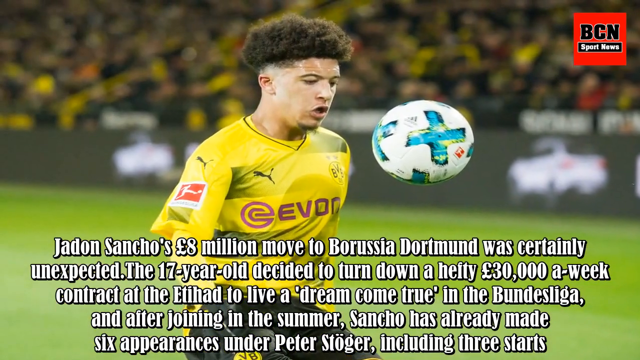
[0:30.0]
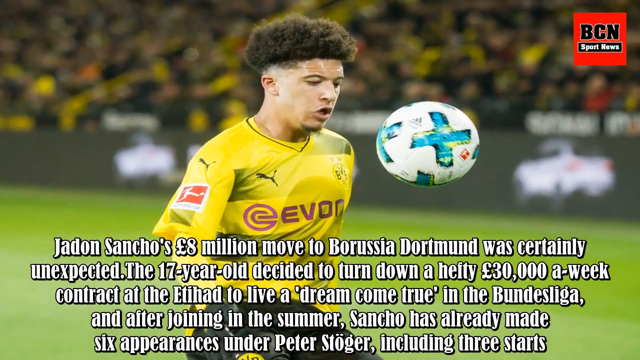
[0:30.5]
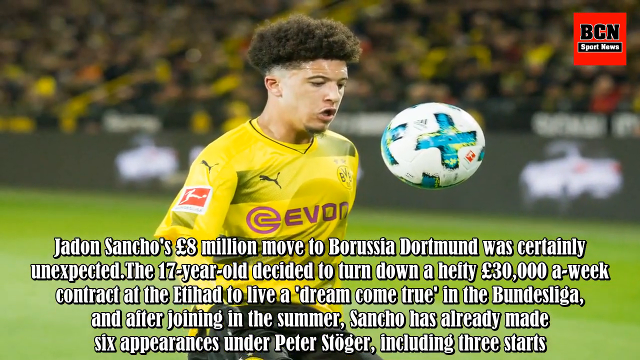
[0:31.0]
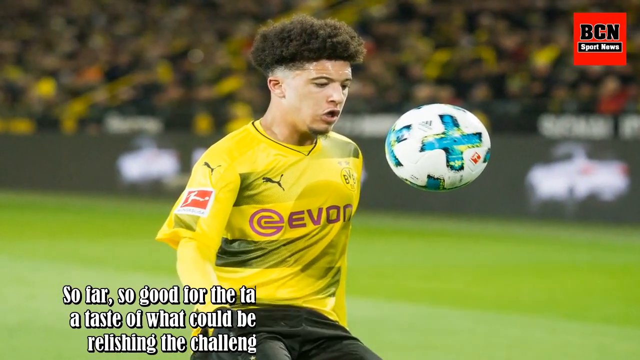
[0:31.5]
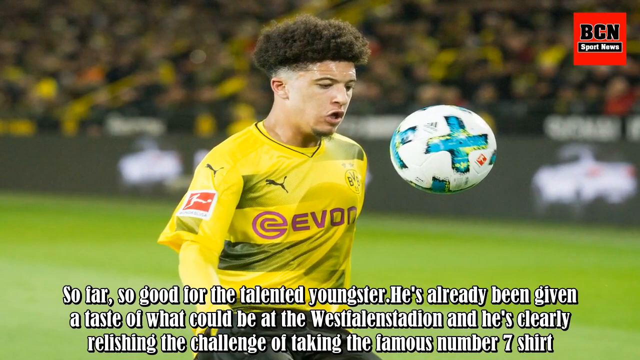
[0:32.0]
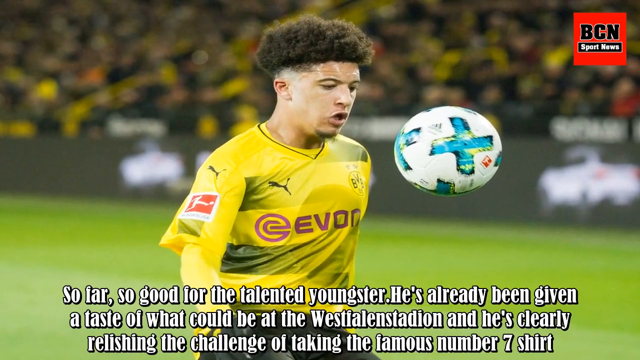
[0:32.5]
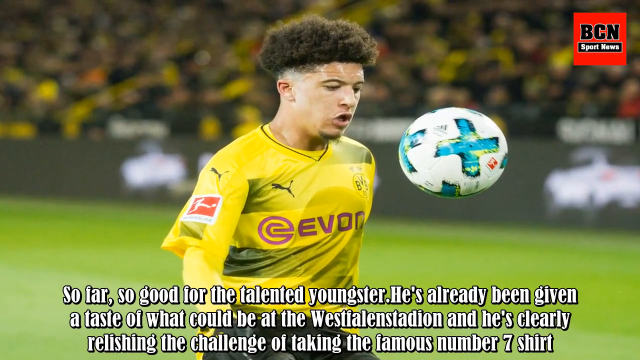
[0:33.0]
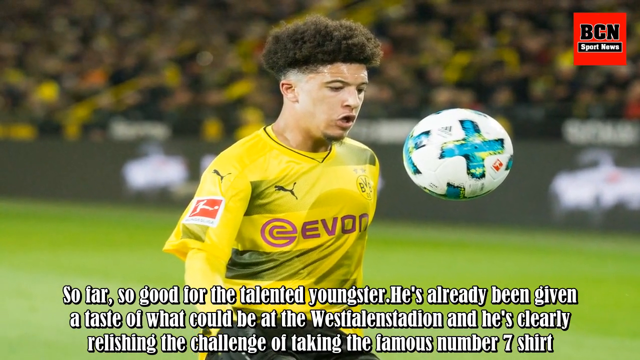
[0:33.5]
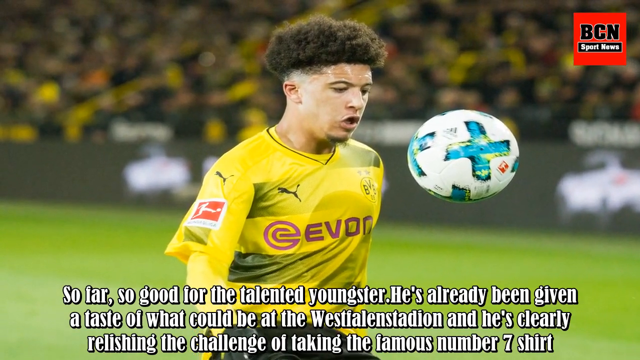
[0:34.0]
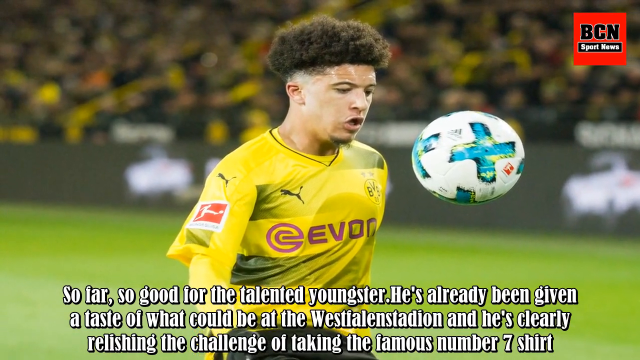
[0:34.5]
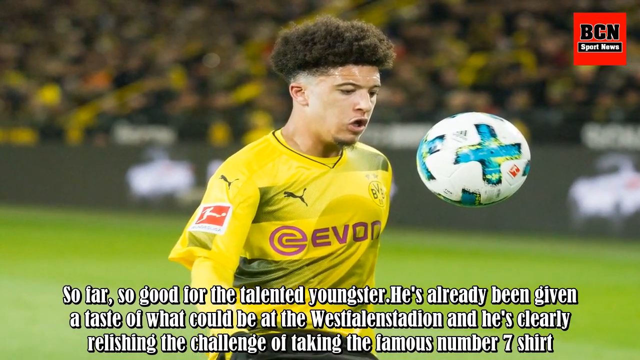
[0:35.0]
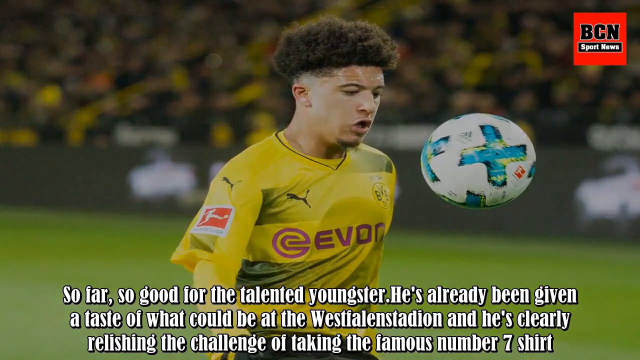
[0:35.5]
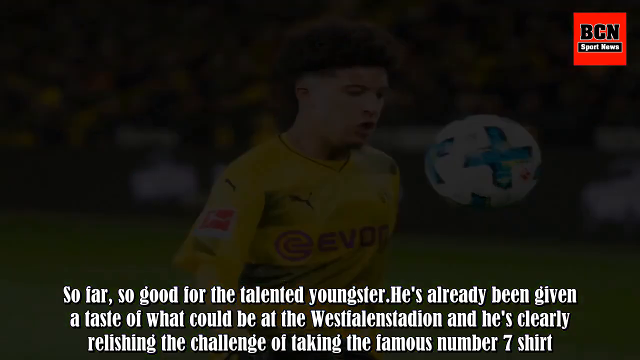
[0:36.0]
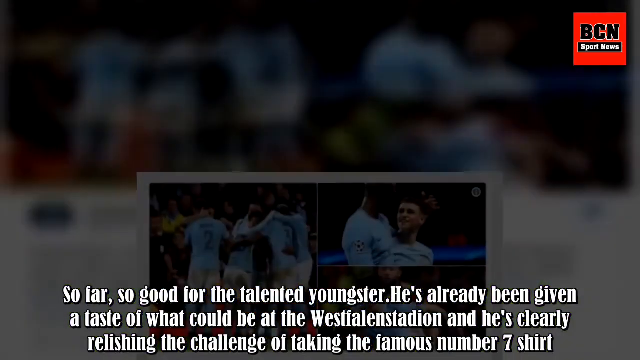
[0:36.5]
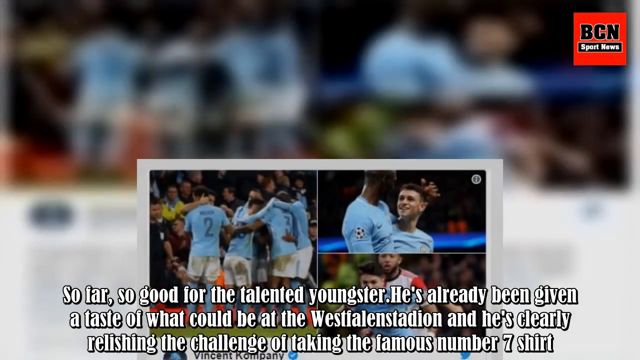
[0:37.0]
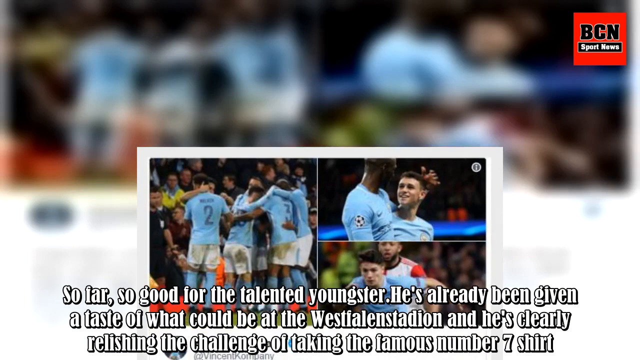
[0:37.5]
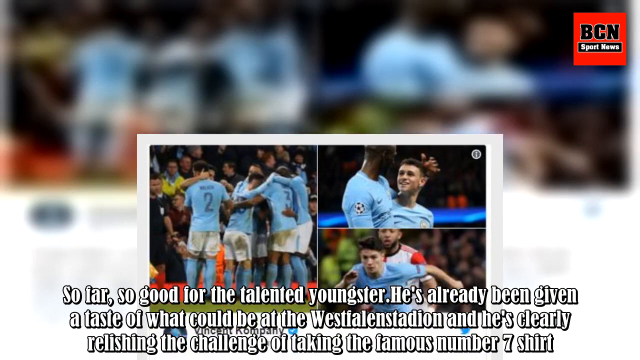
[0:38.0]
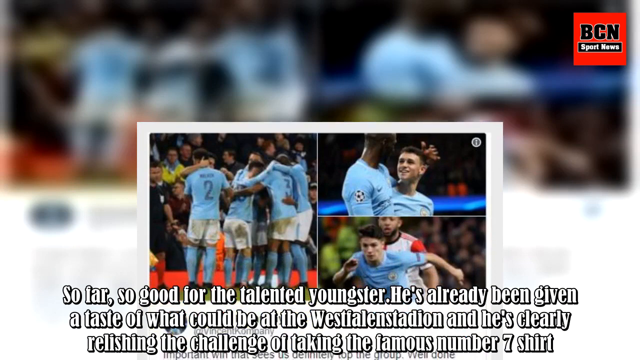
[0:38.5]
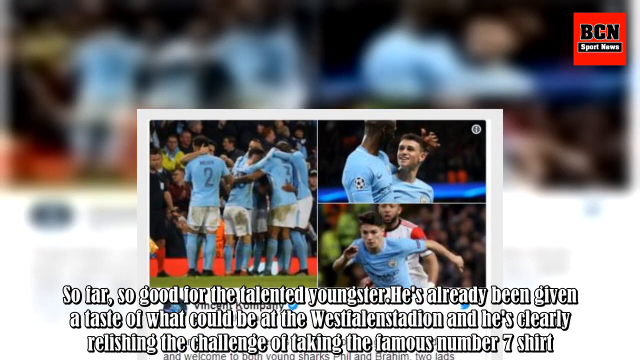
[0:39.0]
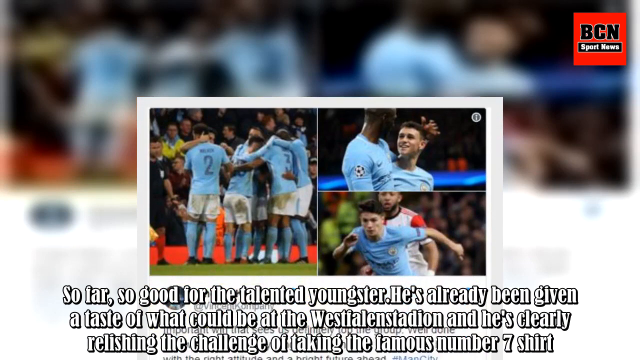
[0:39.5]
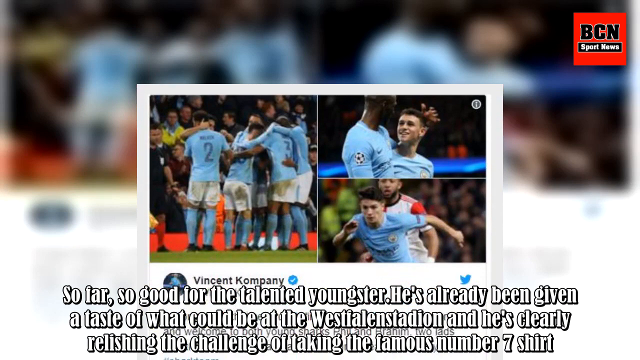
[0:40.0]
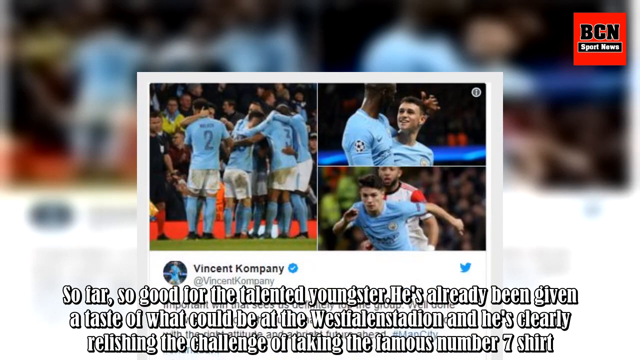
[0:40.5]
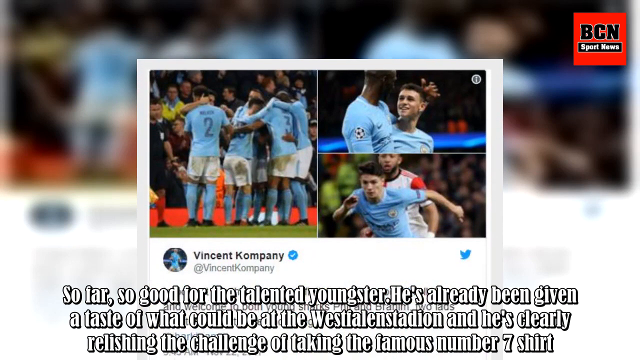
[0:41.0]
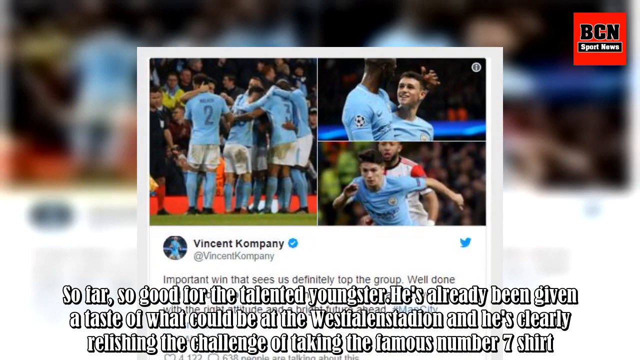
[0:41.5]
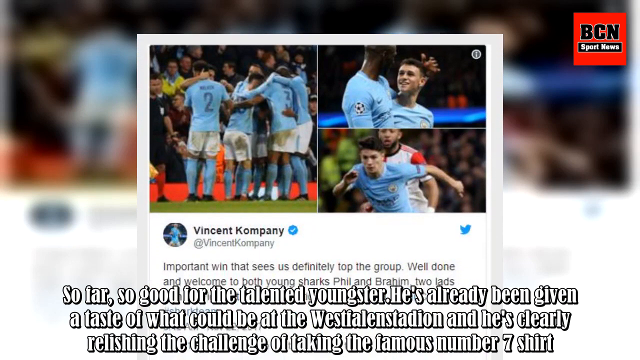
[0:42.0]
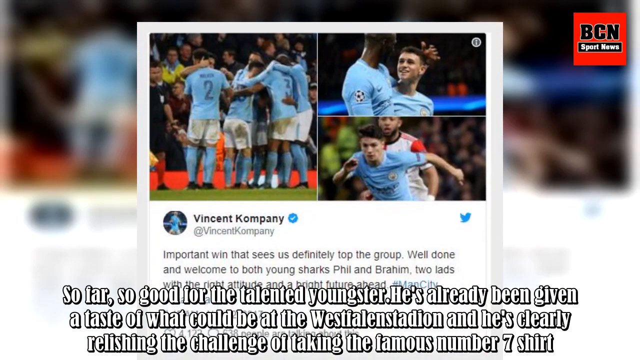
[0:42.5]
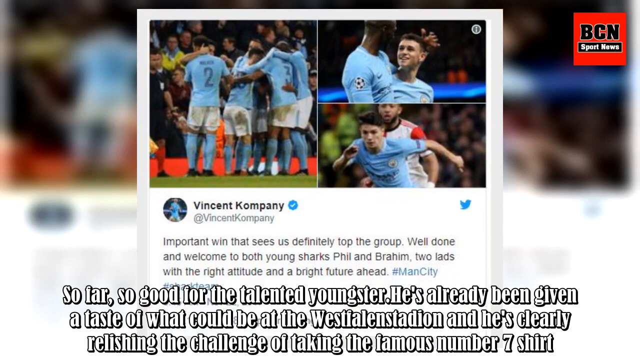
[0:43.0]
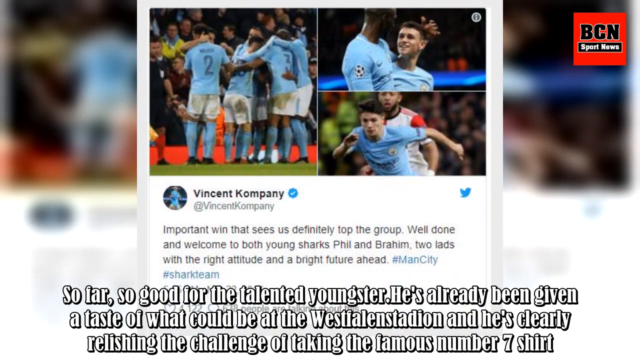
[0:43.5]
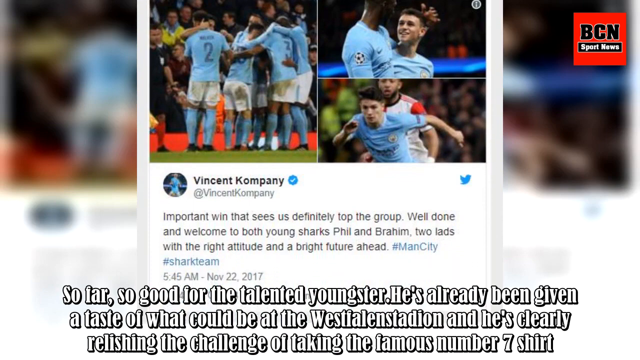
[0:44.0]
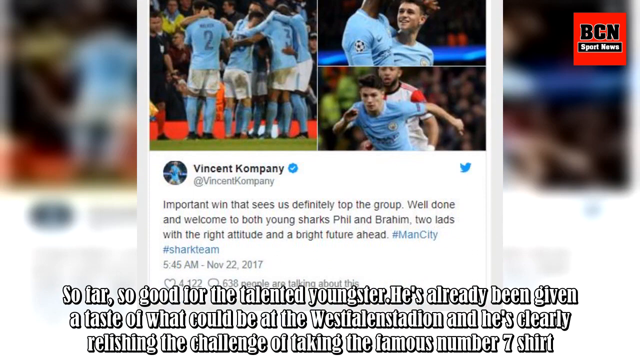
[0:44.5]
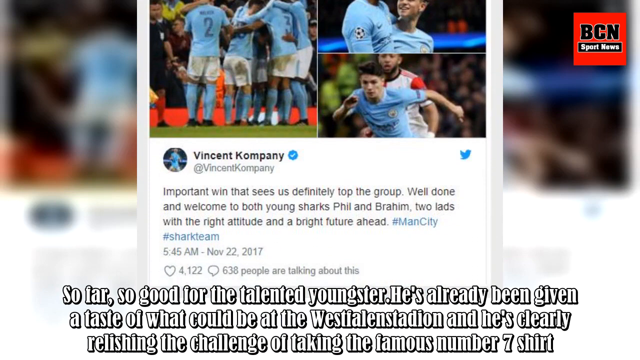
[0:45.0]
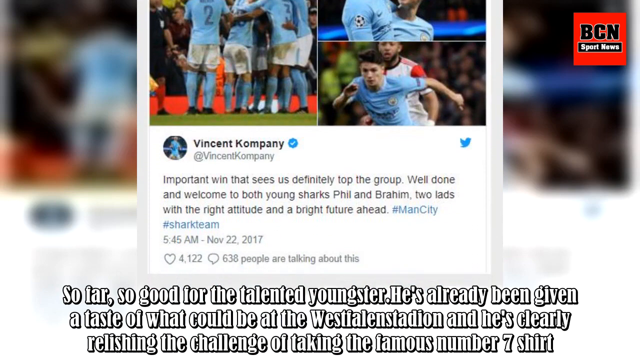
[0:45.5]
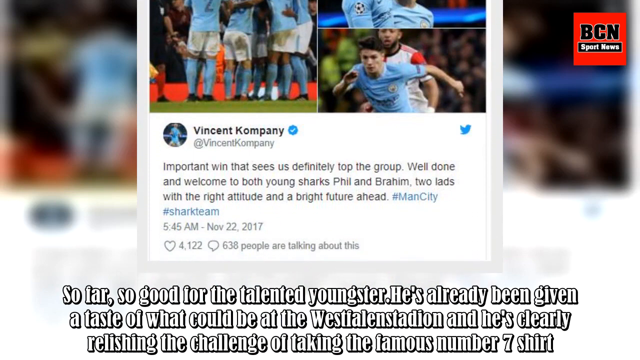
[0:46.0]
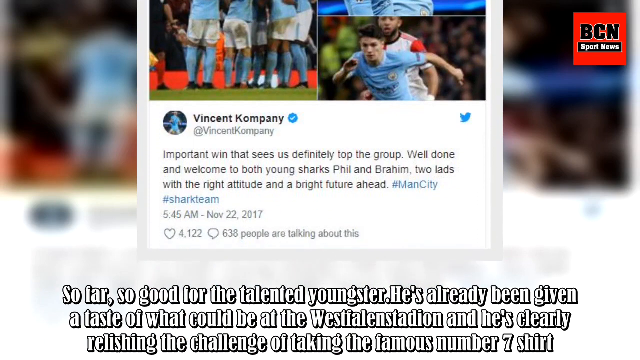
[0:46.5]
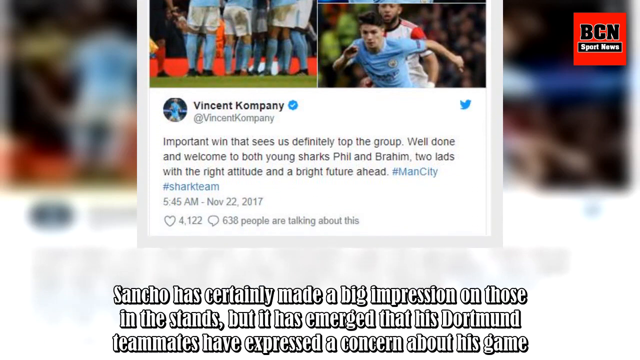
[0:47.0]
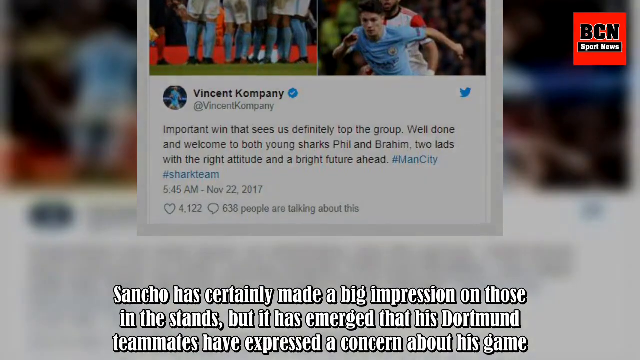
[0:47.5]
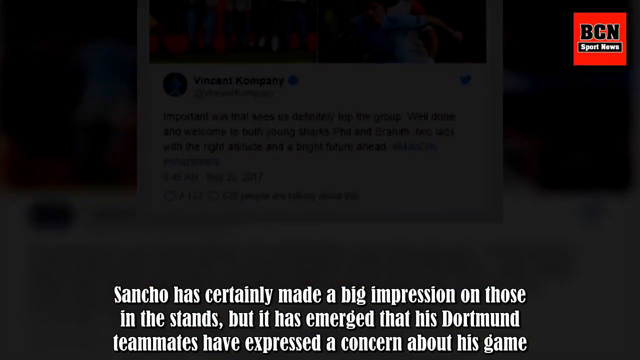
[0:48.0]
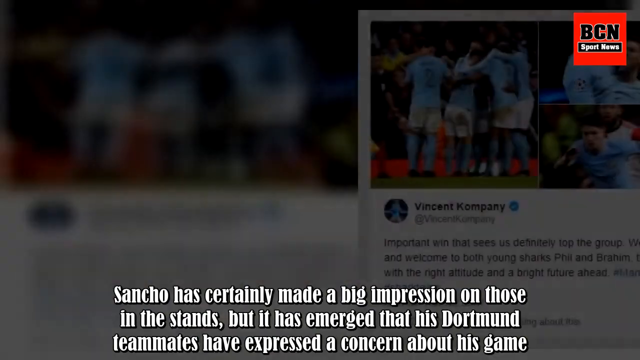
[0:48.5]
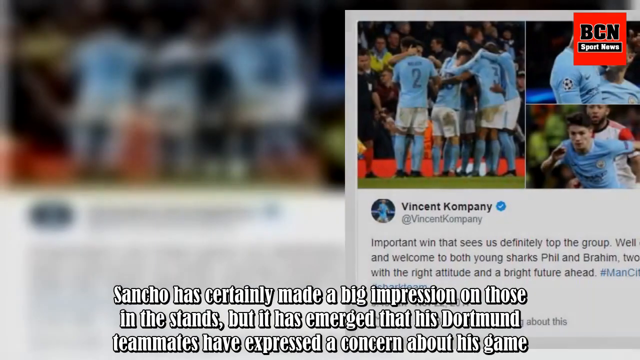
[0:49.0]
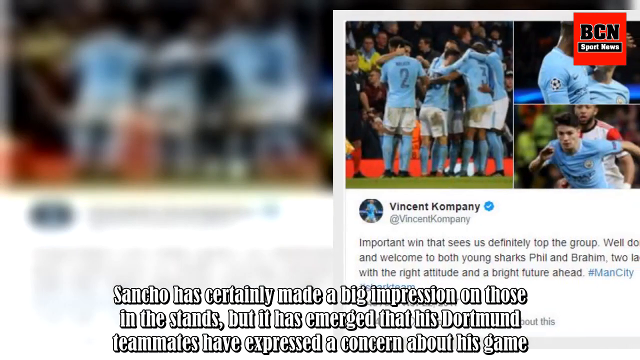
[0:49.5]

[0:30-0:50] A soccer player in a yellow jersey has a ball that looks like it is right in front of his chest, about a foot away. The ball is white with light blue X's. White text is underneath, and in the background is the soccer field, with people in the stands wearing yellow jerseys. The image fades away and cuts to what looks like another image: a group of soccer players in a huddle wearing light blue jerseys and white shorts. On the right side are two more pictures, one on top and one on the bottom. In the top one, two men seem to be embracing, also wearing light blue jerseys. In the bottom one, a player in a light blue jersey seems to be defending, with a man behind him wearing a white and red jersey. The picture seems to move up from the bottom of the screen to the top, and as it does, a paragraph in black text appears that seems to be on a Twitter post.